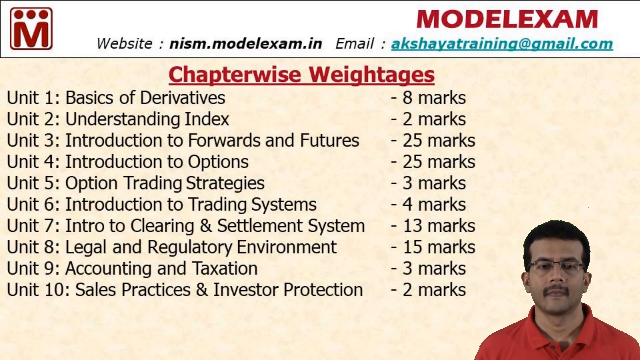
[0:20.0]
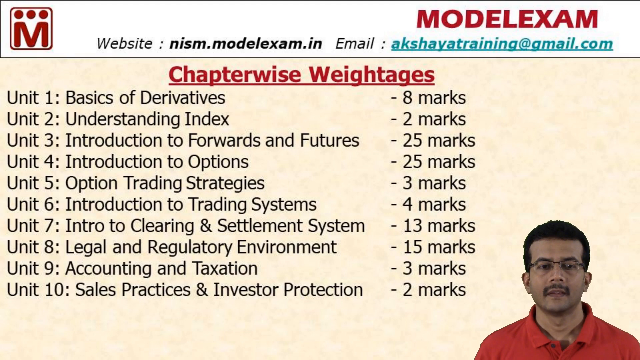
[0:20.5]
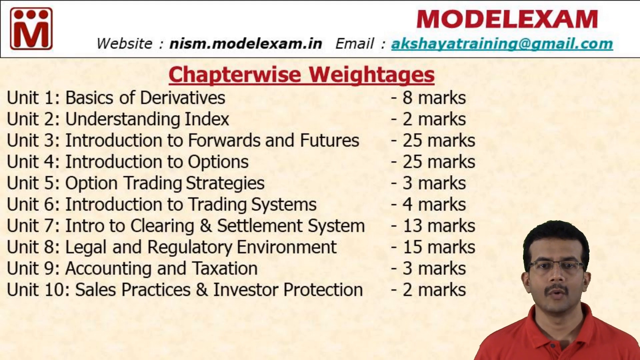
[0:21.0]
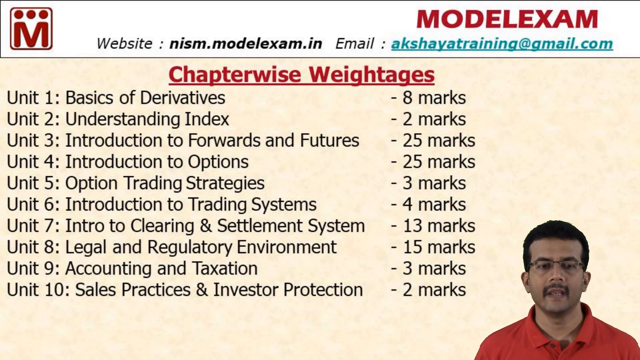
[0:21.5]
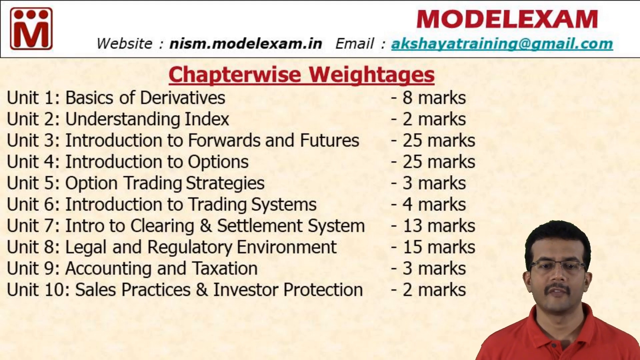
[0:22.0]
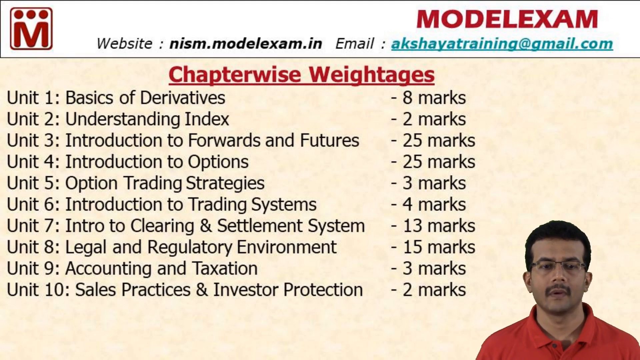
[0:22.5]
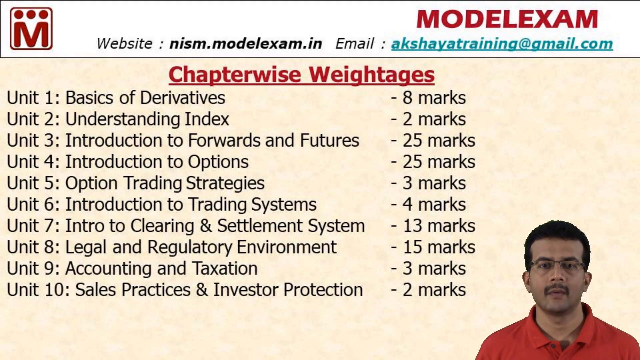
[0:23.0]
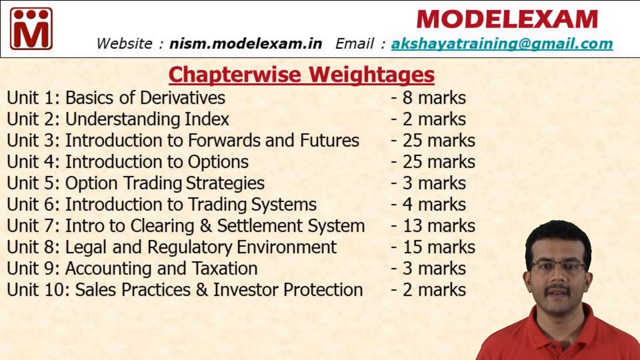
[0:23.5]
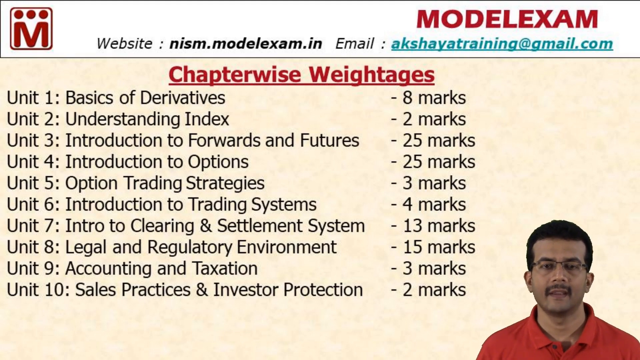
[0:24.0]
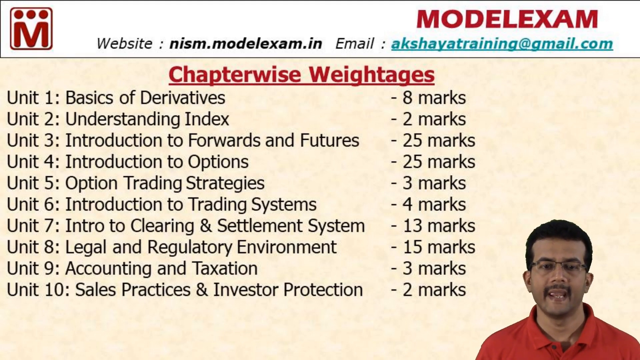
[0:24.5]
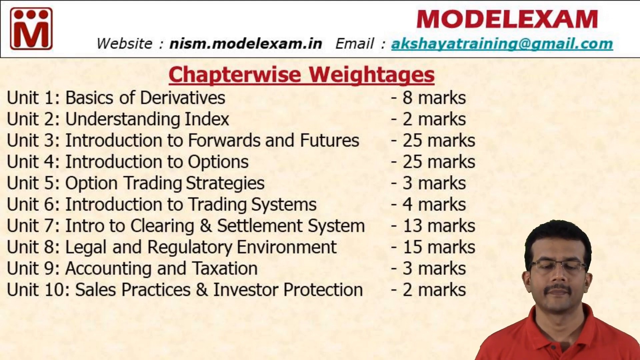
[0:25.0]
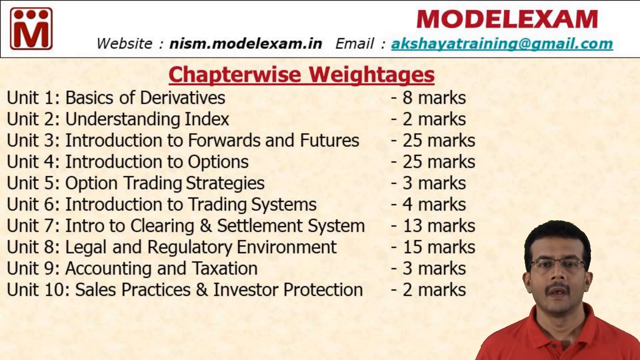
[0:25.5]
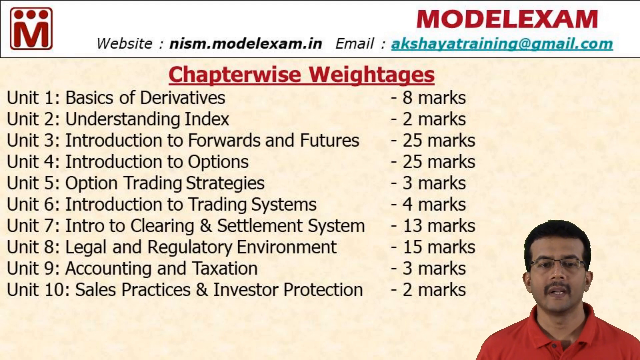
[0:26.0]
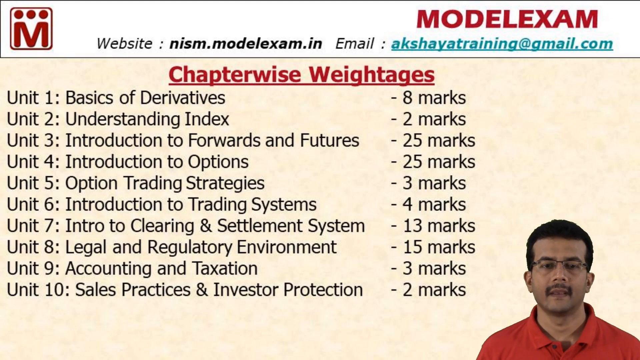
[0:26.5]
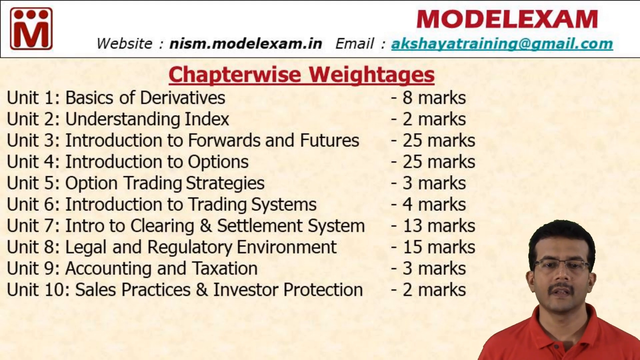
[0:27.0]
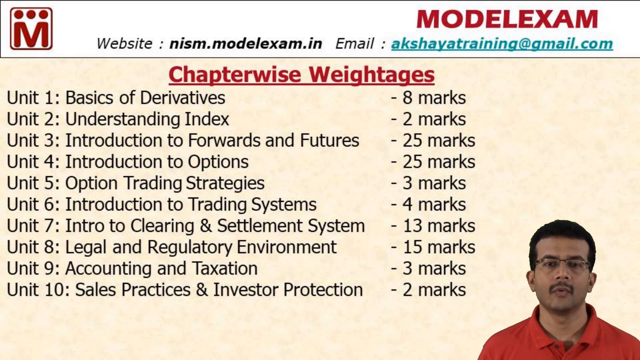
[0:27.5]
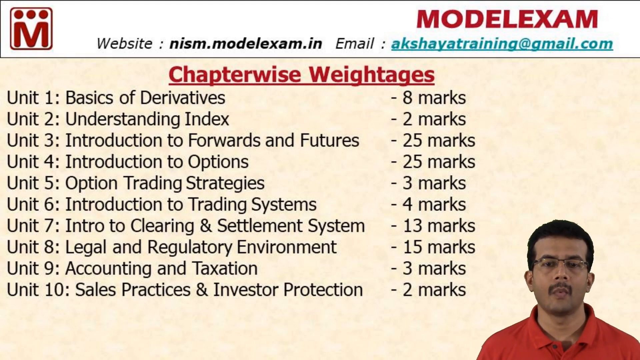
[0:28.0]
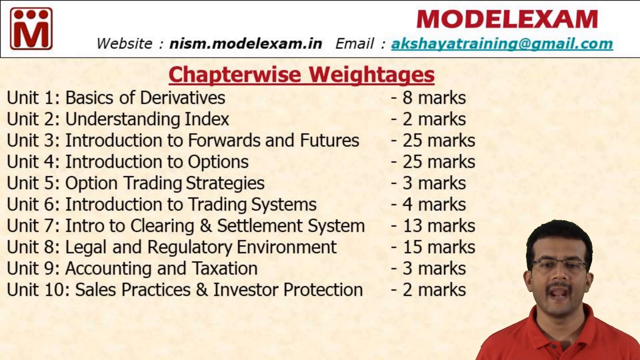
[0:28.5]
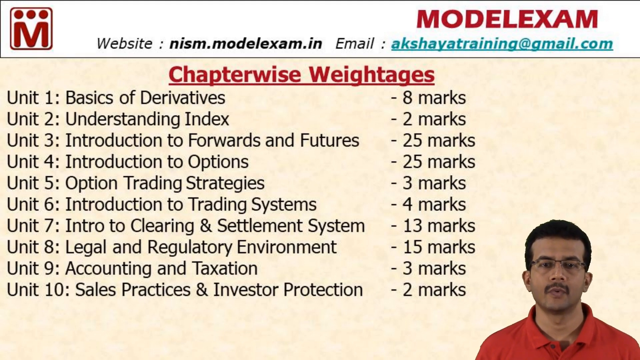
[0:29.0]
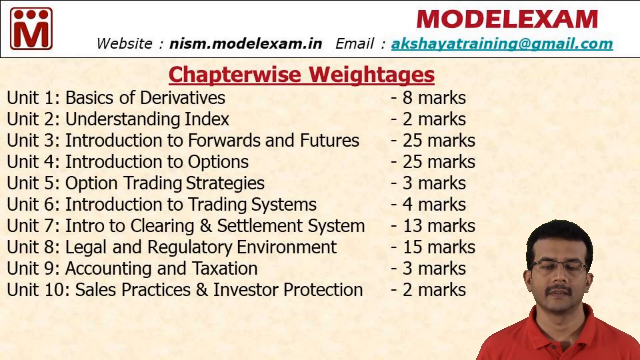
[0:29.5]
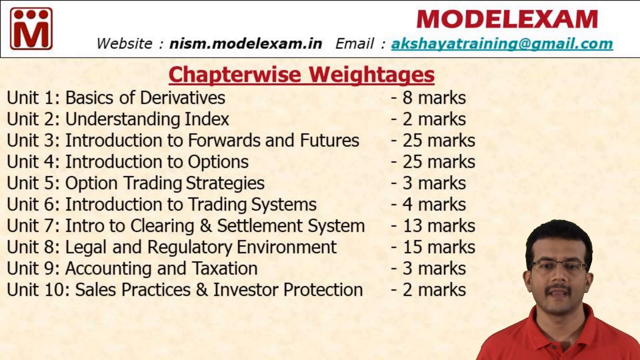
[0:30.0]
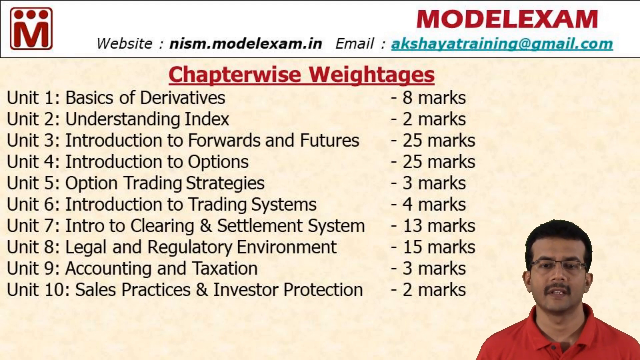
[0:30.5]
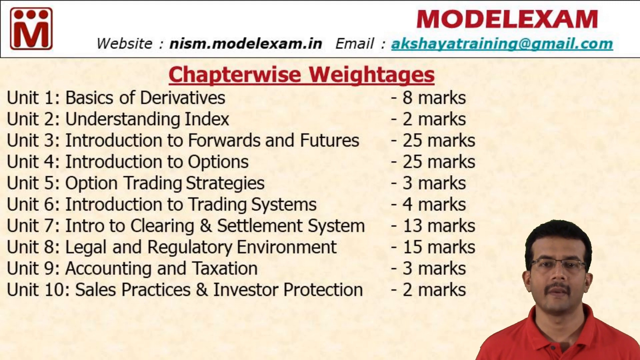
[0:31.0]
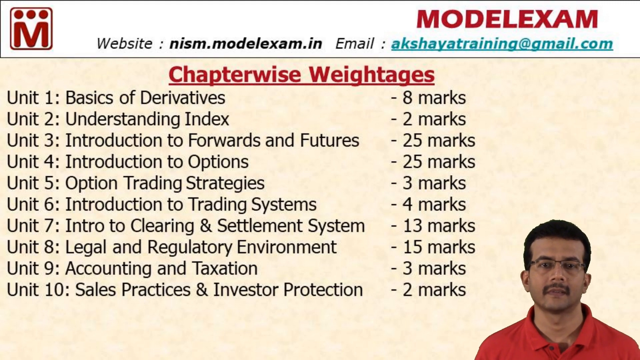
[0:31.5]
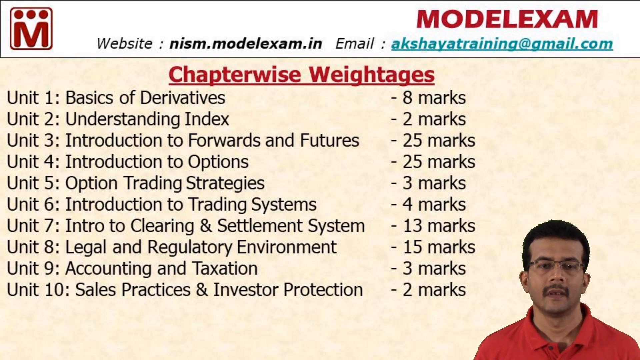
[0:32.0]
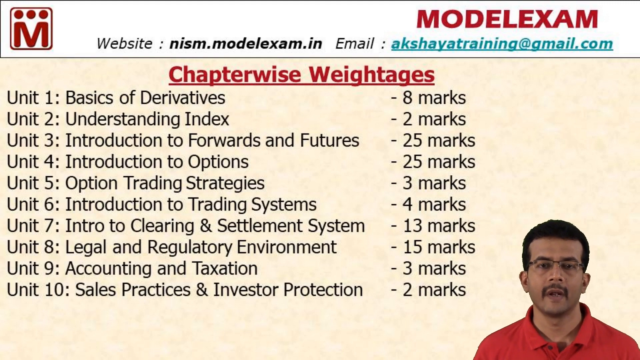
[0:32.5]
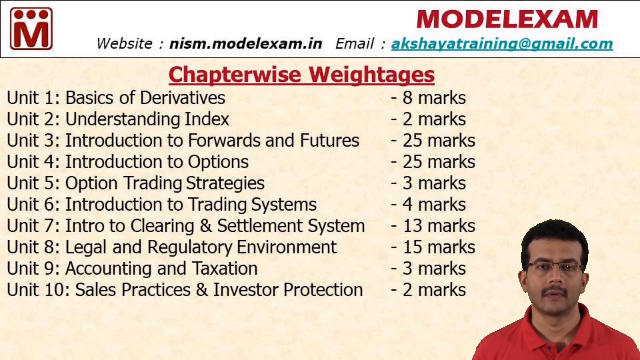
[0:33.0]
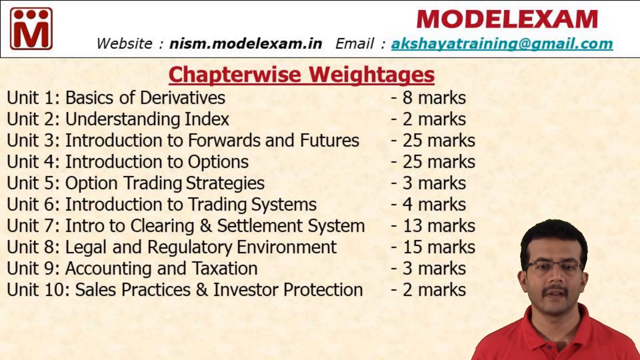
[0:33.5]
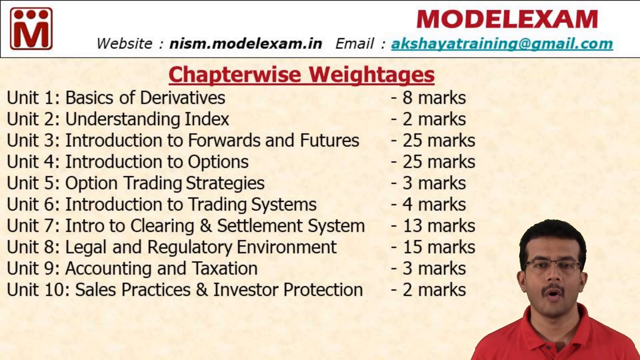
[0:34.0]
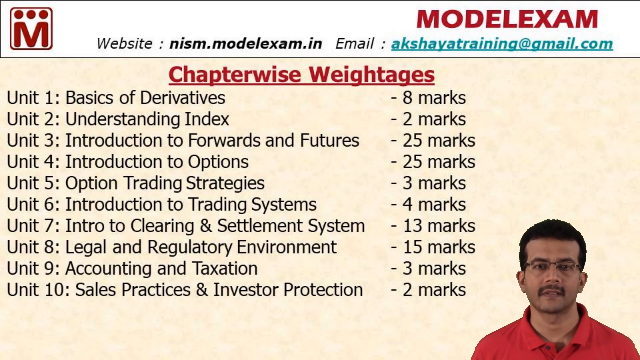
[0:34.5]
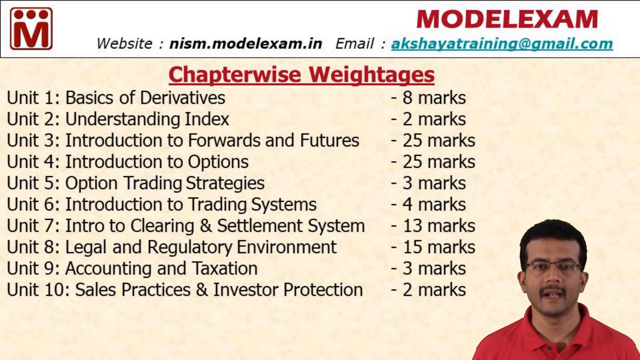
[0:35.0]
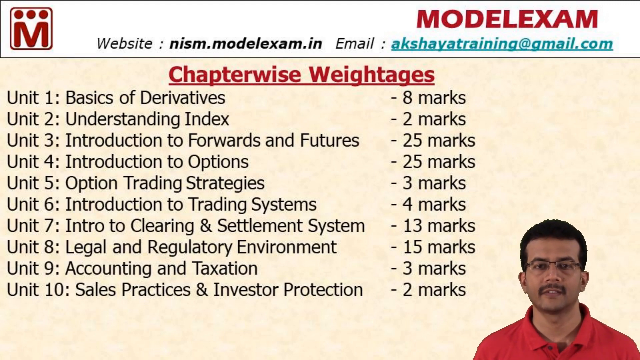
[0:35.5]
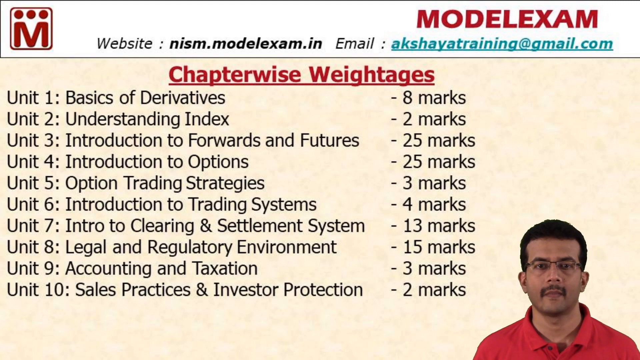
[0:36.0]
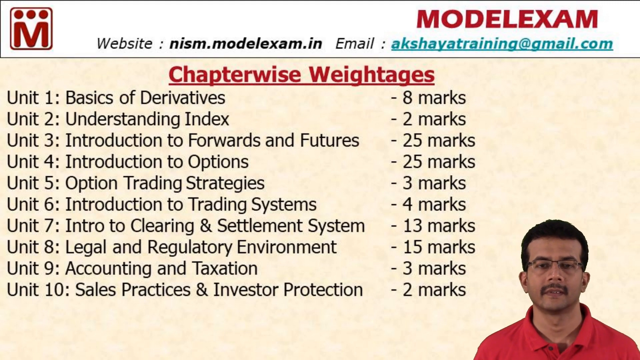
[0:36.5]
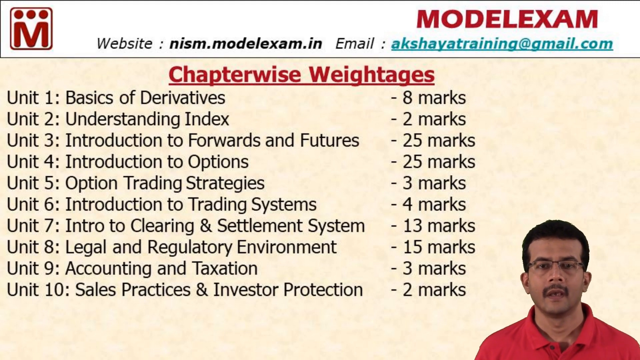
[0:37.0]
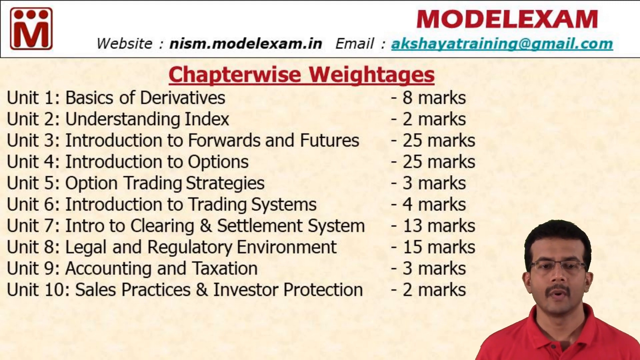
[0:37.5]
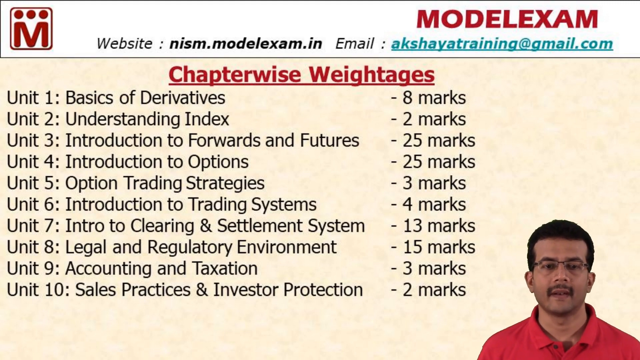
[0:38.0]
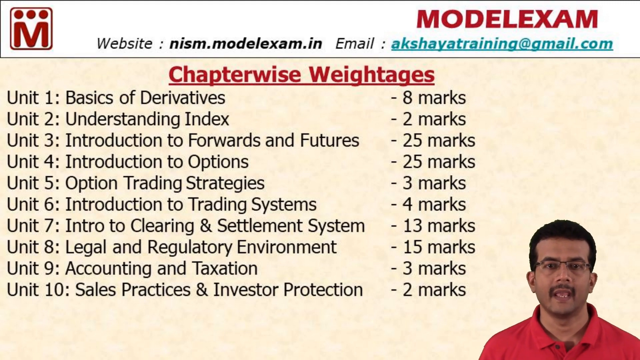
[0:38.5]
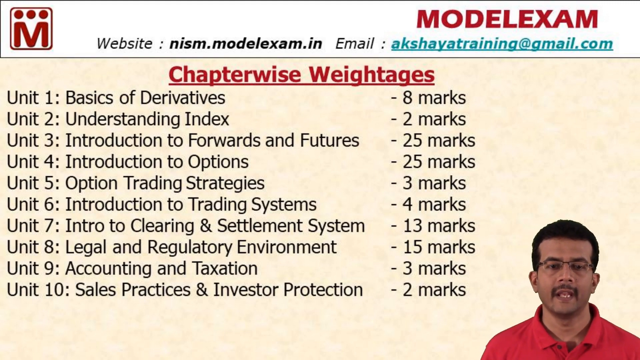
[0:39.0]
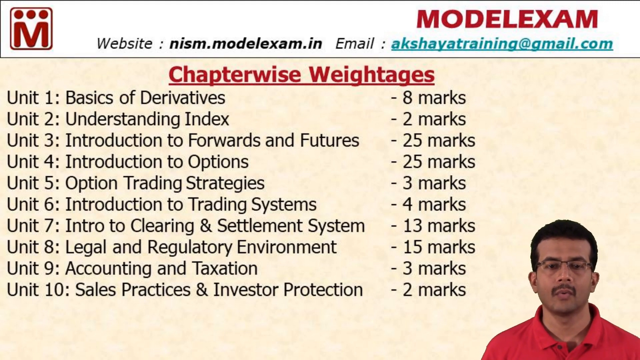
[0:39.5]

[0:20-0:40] The man continues to speak to the camera. His eyes appear to look somewhat downward, as if he is reading off a screen in front of him; he looks down, then looks back up toward the camera and keeps speaking. He has a neutral expression, and only his shoulders and up are visible. The slide is static and shows units 1 through 10, the name of each unit, and the number of marks in each. The first reads "unit 1: basics, derivatives" with "- 8 marks" in the right-hand column. Then come "Unit 2: understanding, index - 2", "Unit 3: introduction to forwards and futures - 25 marks", "Unit 4: Introduction to Options - 25 marks" and "Unit 5 - Option, Trading Strategies - 3 marks".